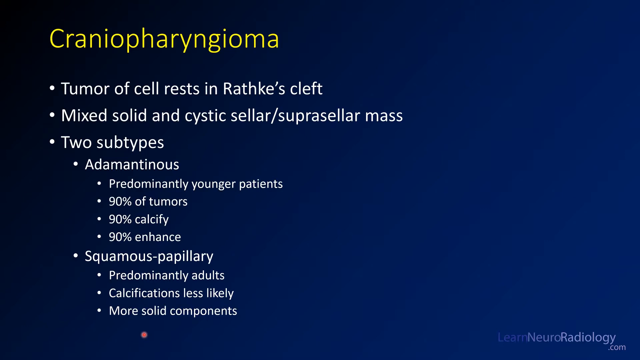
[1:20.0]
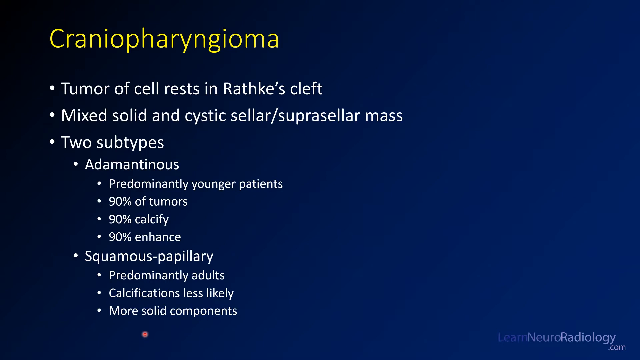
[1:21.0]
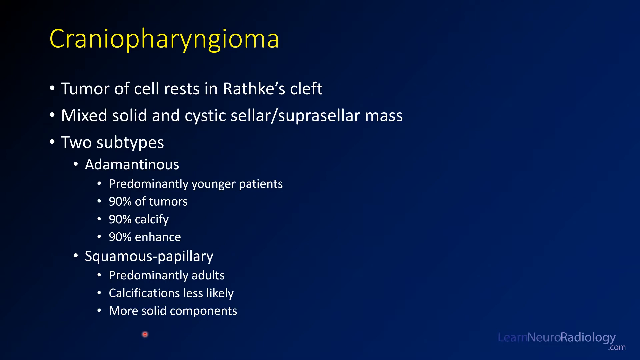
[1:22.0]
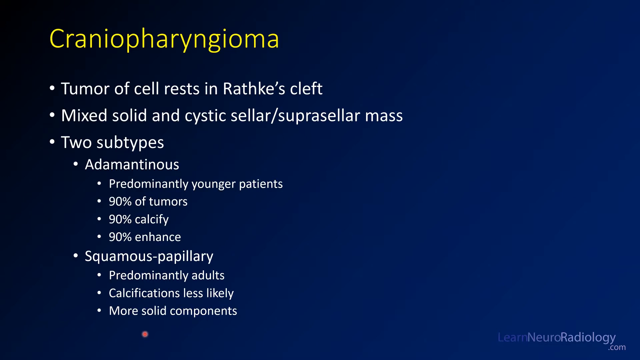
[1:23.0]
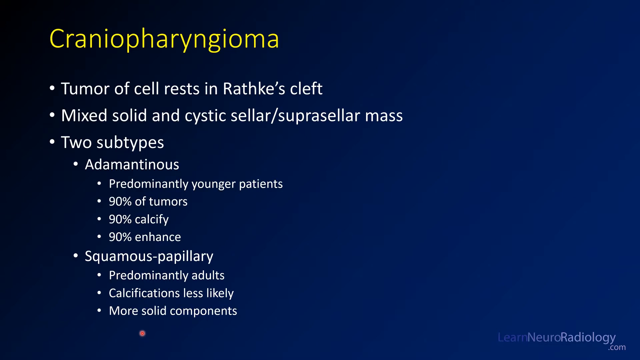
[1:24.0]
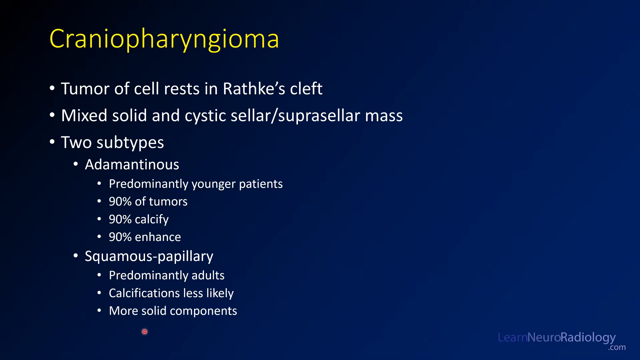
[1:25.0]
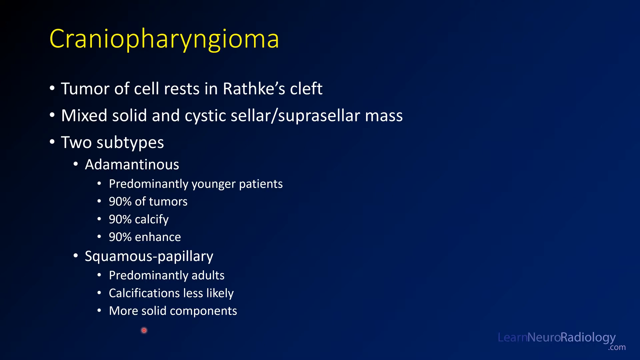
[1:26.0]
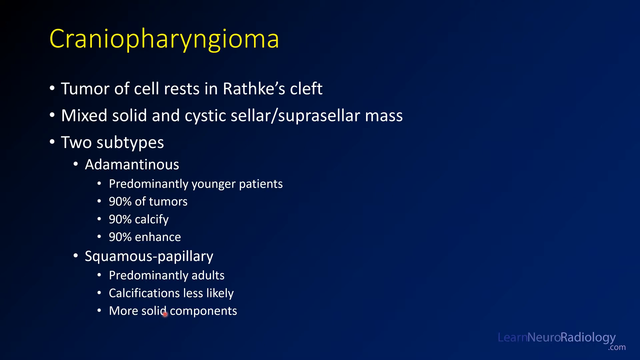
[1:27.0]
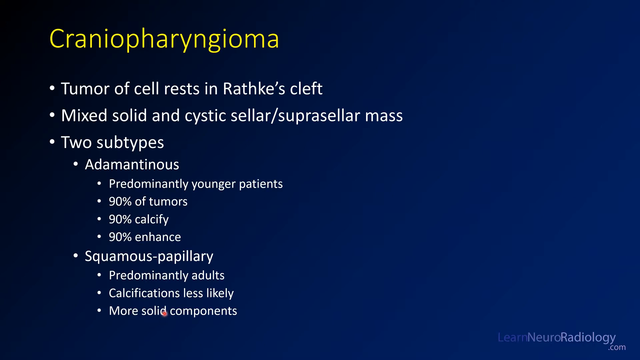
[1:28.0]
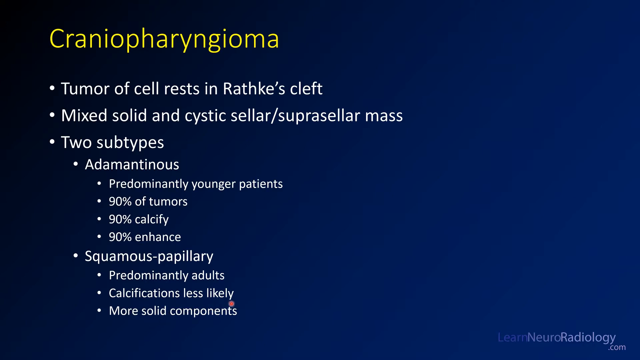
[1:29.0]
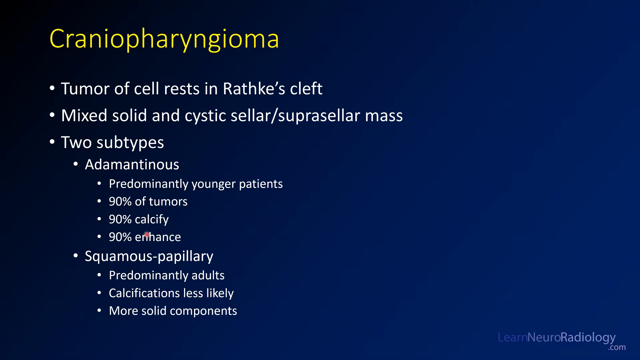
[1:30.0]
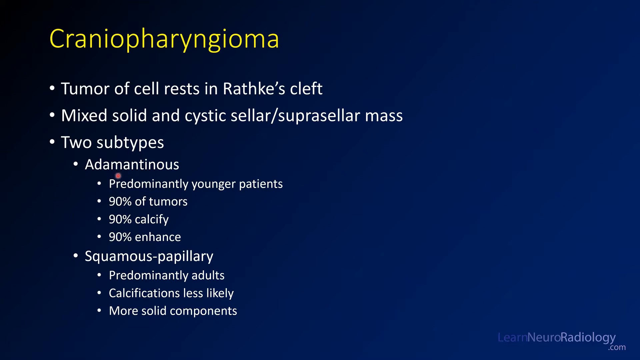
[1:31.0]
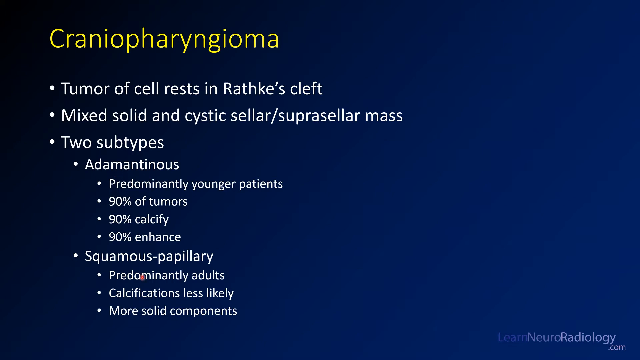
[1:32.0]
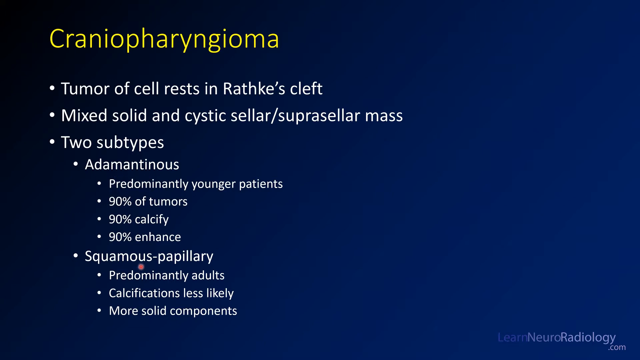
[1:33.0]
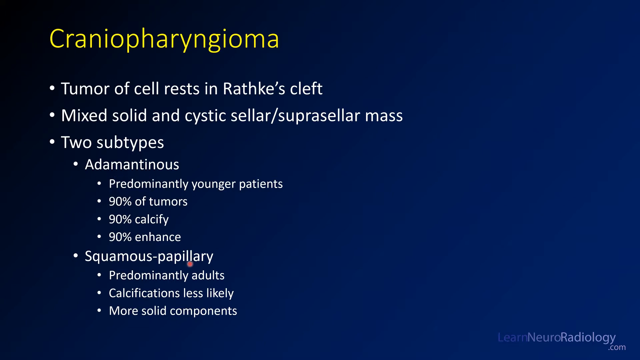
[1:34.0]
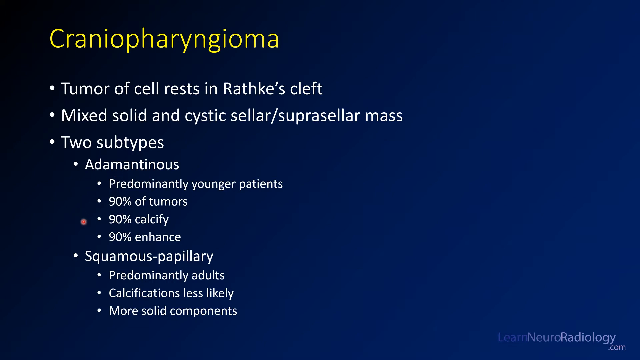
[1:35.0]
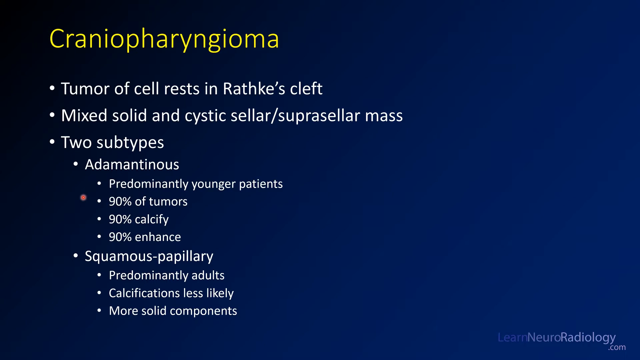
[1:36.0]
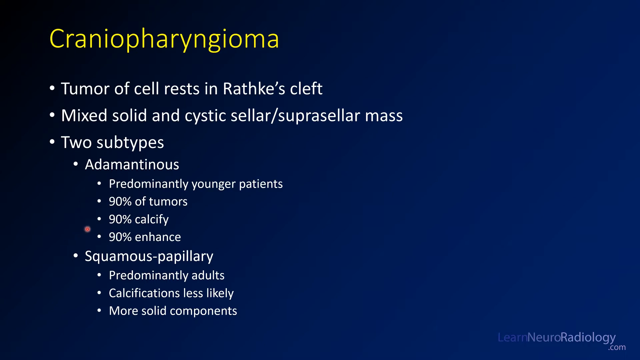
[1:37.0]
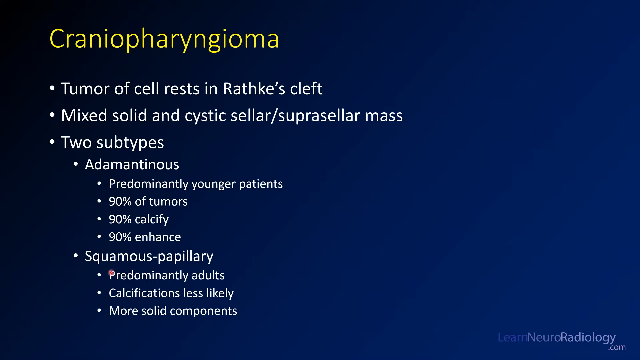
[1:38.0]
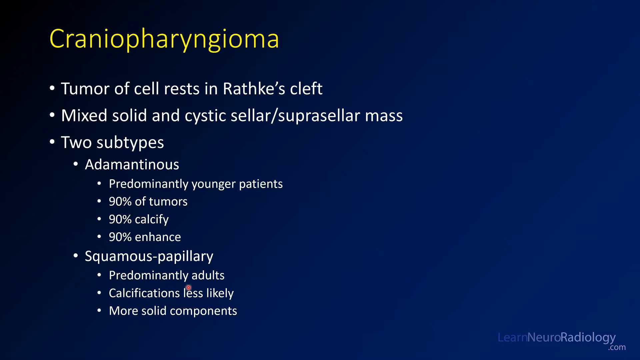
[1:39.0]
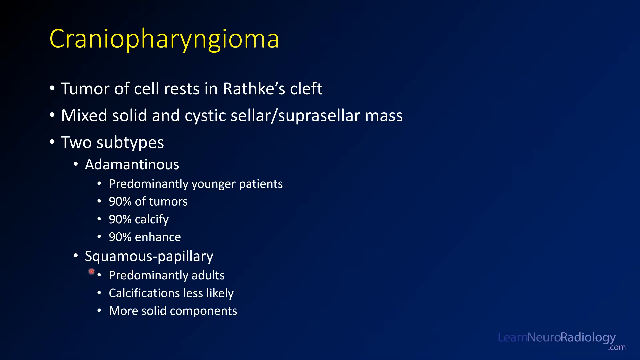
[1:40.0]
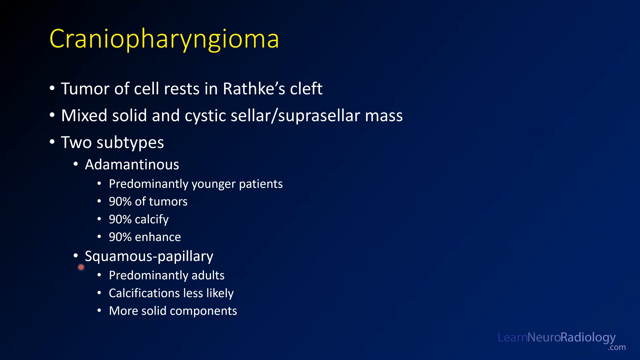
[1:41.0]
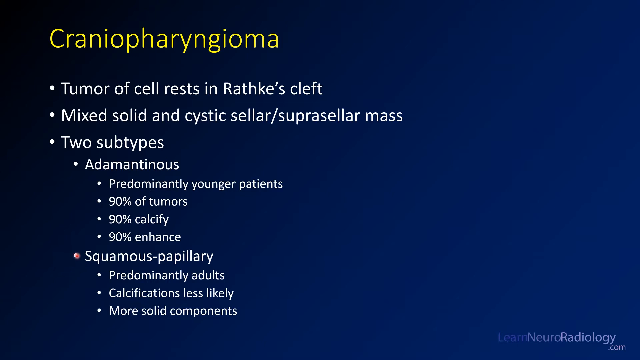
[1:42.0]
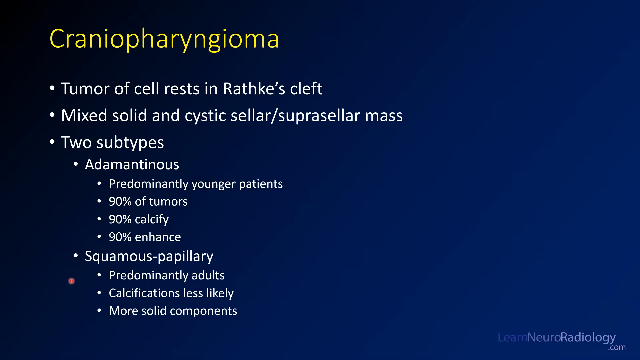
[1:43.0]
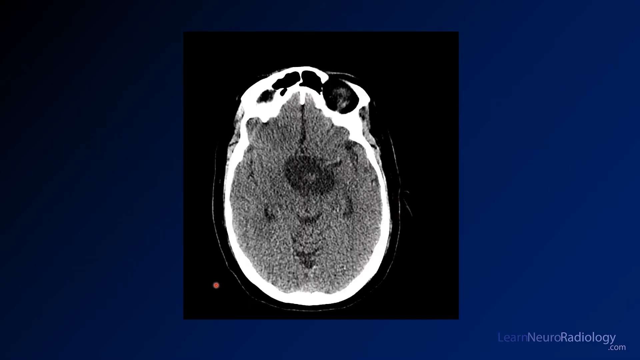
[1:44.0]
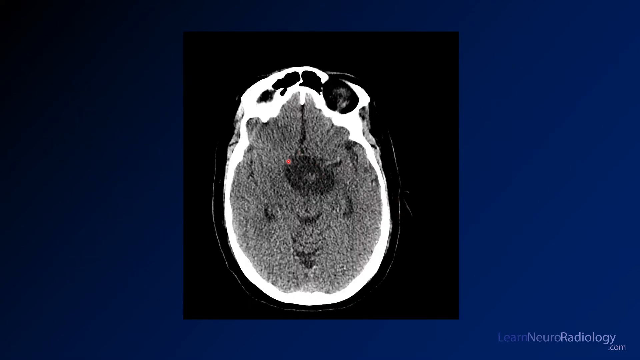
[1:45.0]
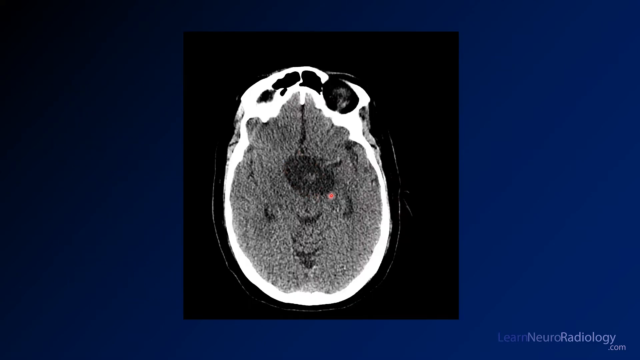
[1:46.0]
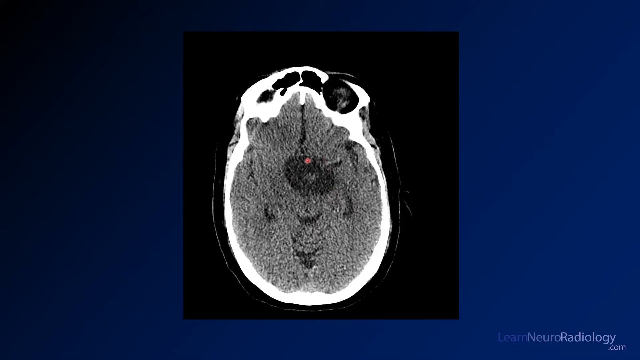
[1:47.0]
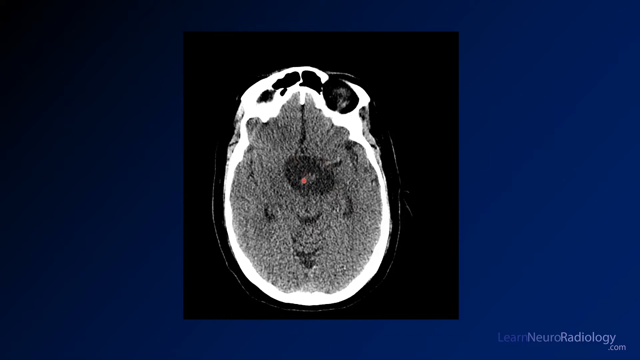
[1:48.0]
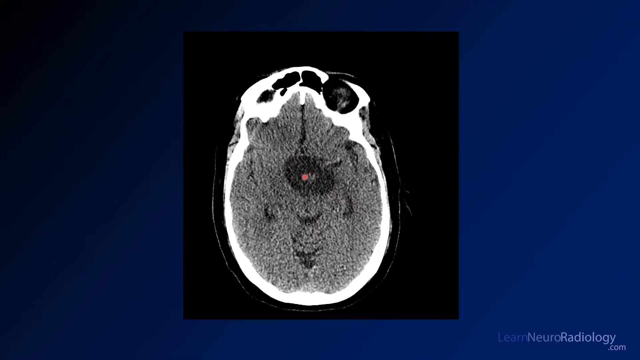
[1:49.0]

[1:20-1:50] The blue screen now shows a larger yellow heading at the top reading "craniopharyngioma," with bullet points underneath. The first begins "Tumour of cell rests in" and describes a "mixed solid and cystic" mass. Another lists "two subtypes": "adamantinous, predominantly younger patients, 90% of tumours," and "squamous papillary, predominantly adults, calcifications less likely, more solid components." A small red dot seems to move between the words on the screen, almost like a laser pointer. The video then moves to a scan of the brain, apparently the first image shown. The red dot points around the darker grey matter in the middle of the brain and then at a smaller white mass in the middle of that darker grey mass.